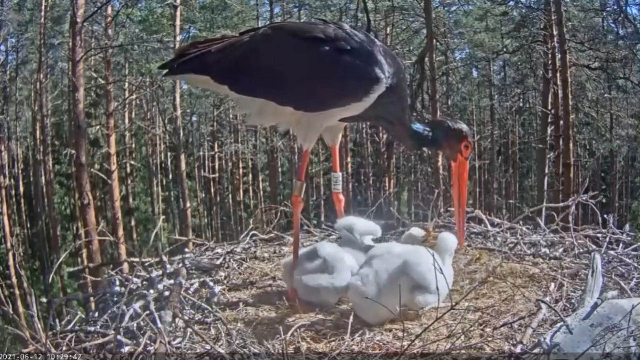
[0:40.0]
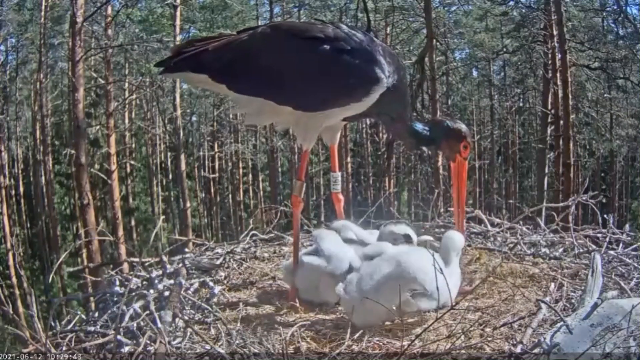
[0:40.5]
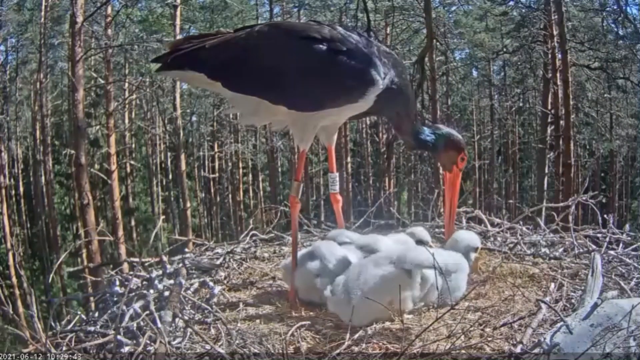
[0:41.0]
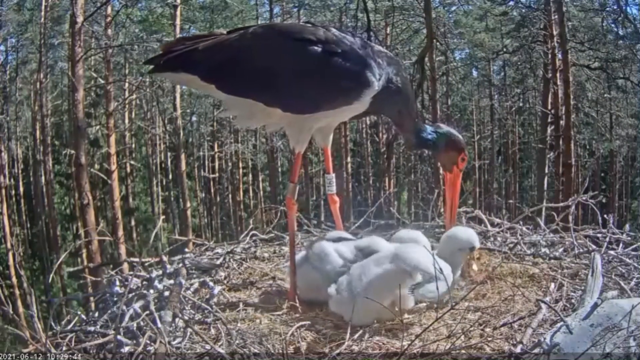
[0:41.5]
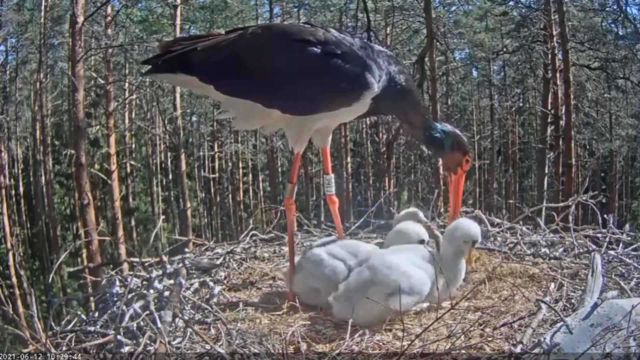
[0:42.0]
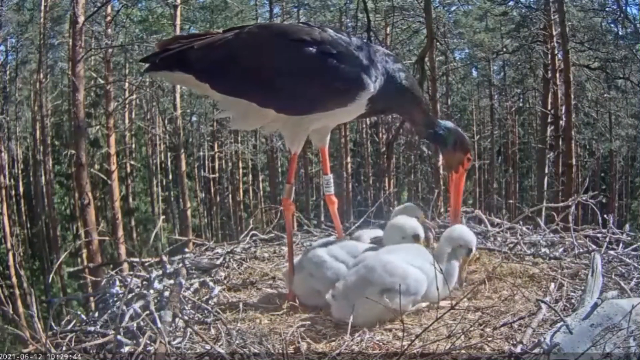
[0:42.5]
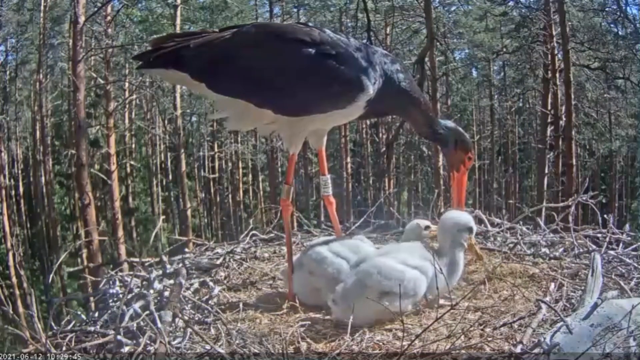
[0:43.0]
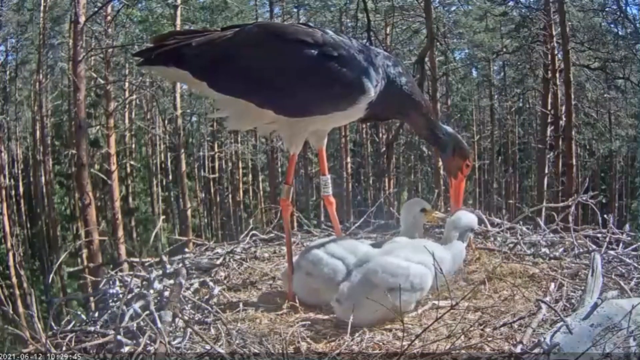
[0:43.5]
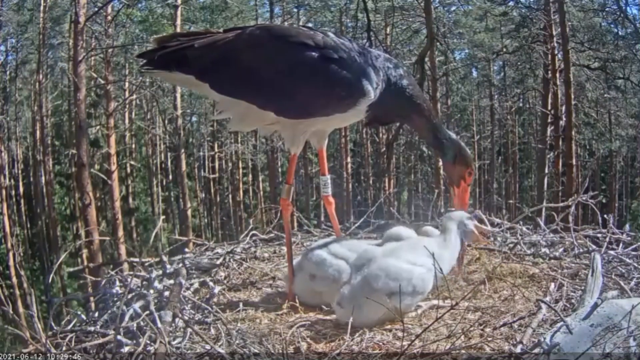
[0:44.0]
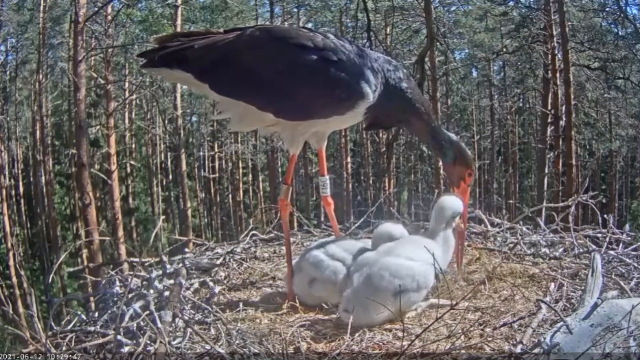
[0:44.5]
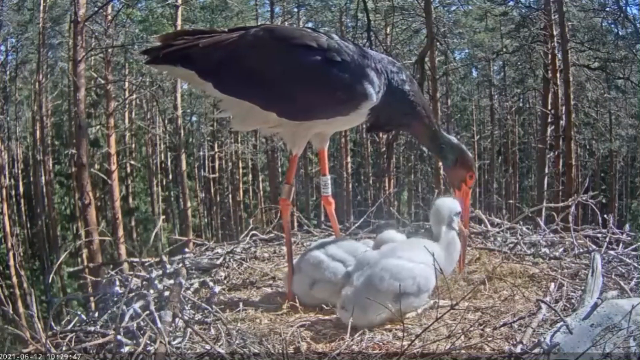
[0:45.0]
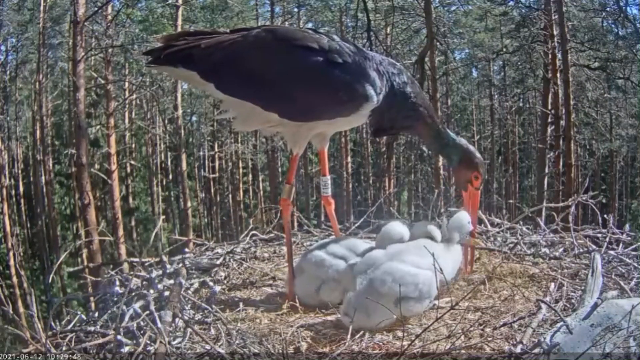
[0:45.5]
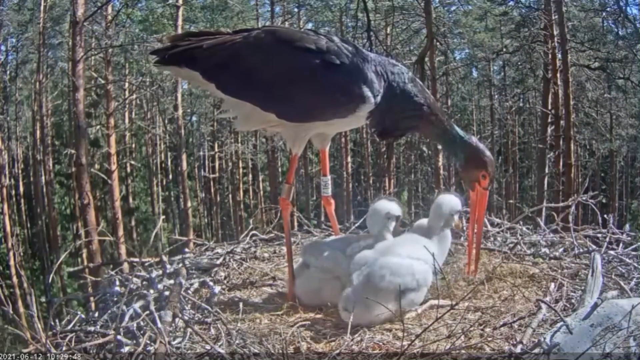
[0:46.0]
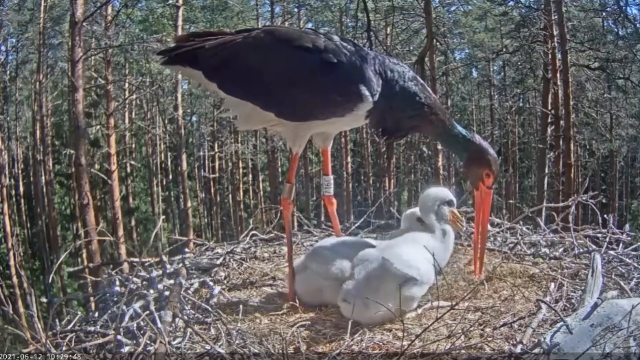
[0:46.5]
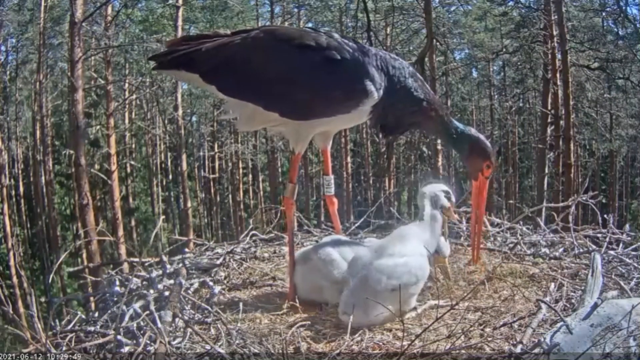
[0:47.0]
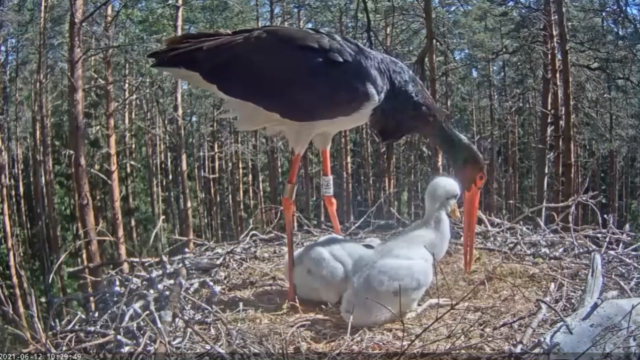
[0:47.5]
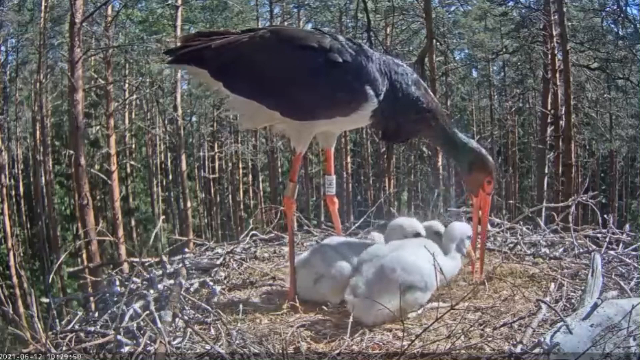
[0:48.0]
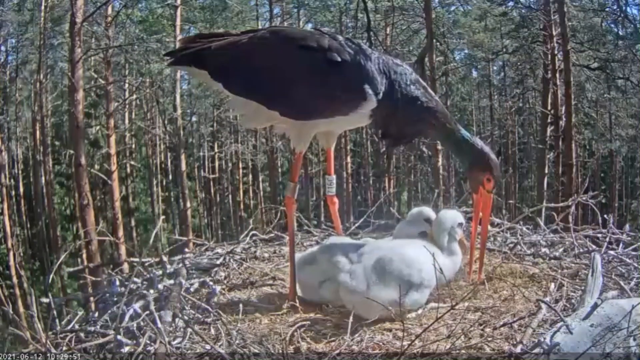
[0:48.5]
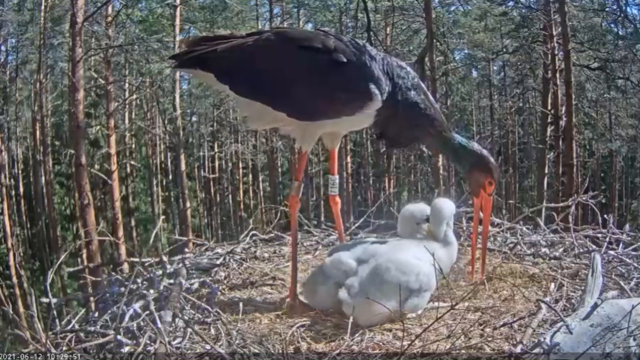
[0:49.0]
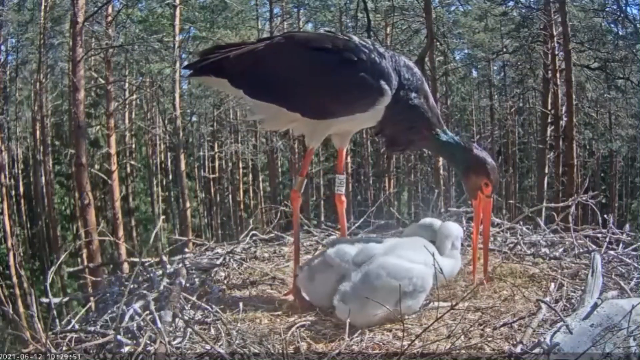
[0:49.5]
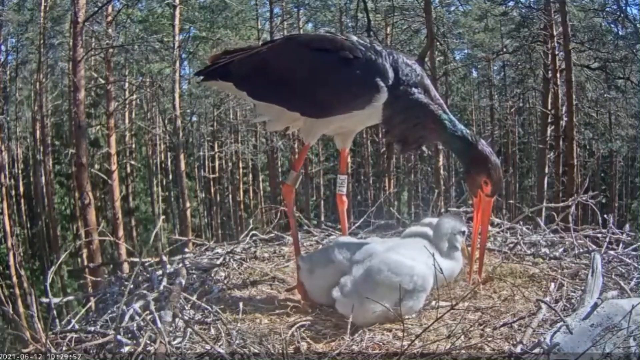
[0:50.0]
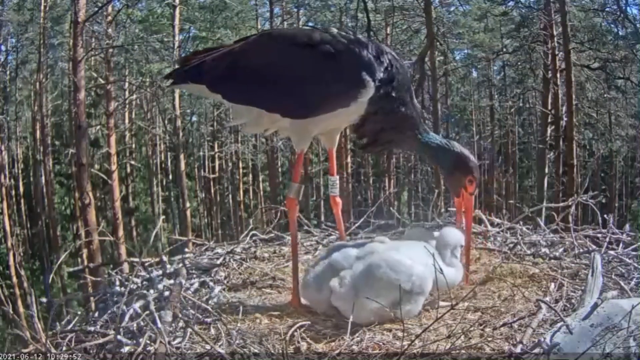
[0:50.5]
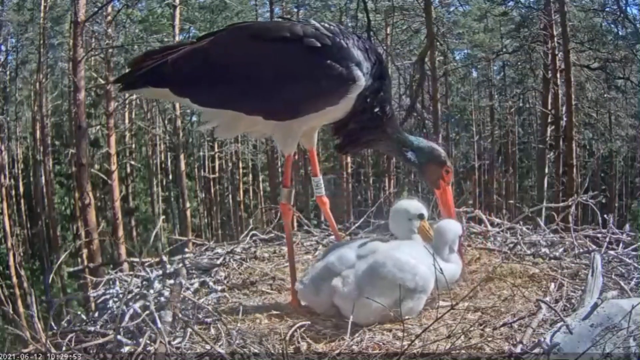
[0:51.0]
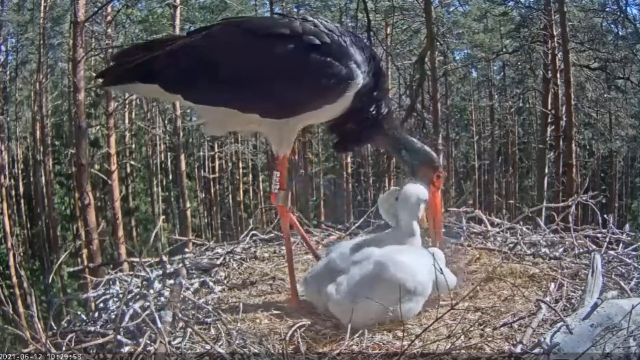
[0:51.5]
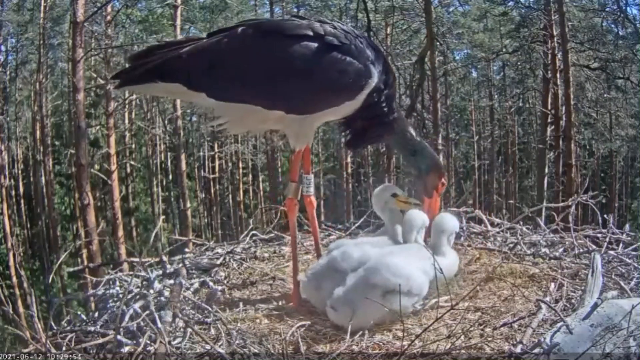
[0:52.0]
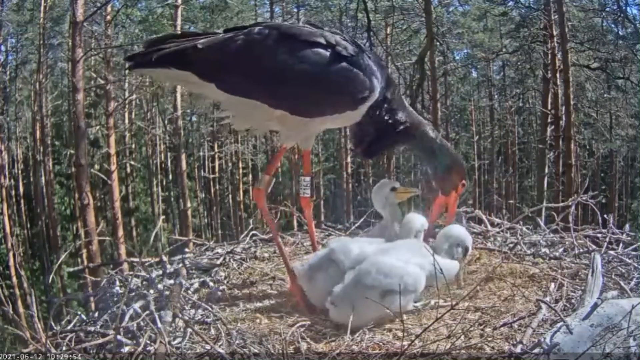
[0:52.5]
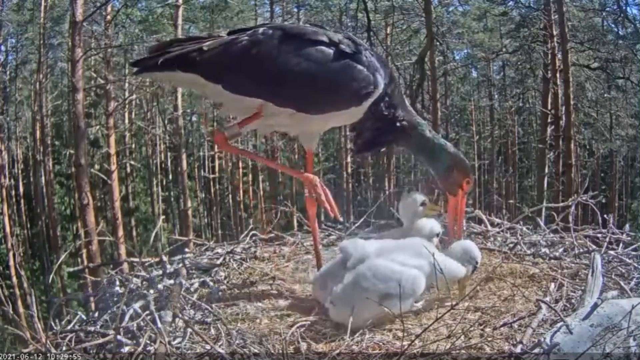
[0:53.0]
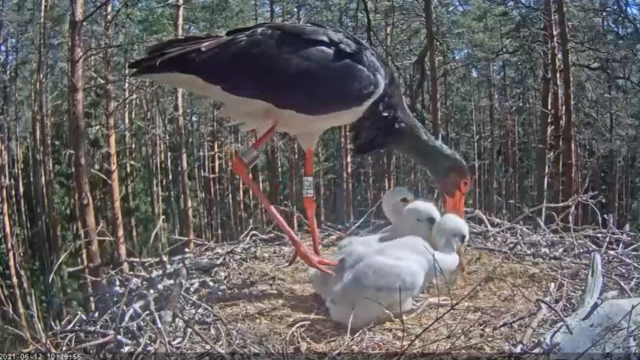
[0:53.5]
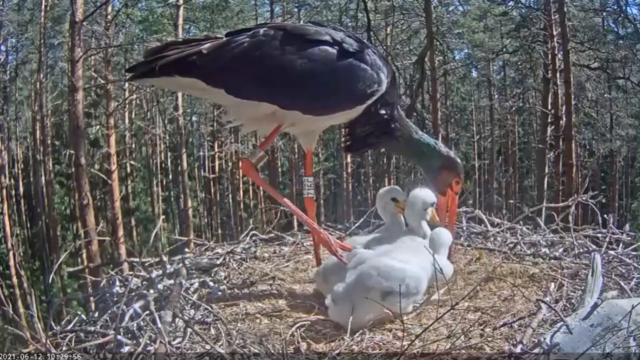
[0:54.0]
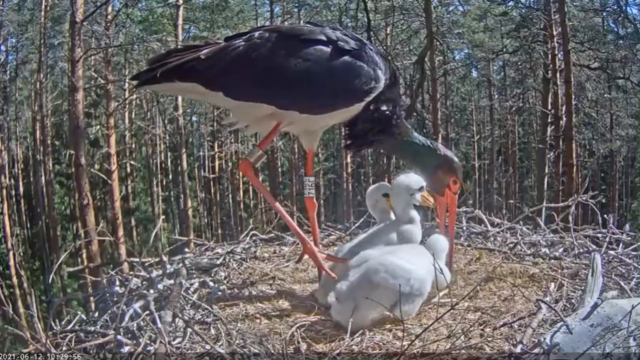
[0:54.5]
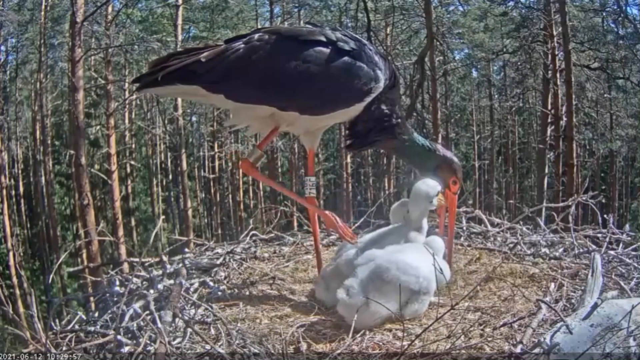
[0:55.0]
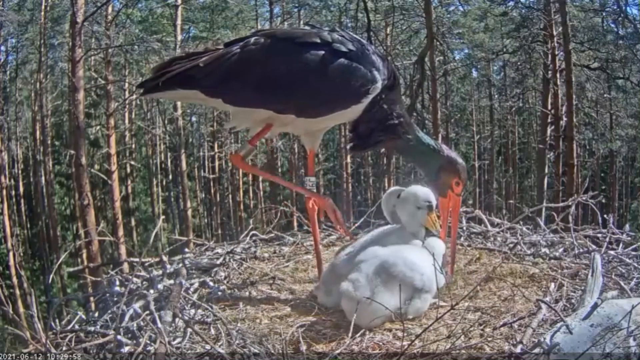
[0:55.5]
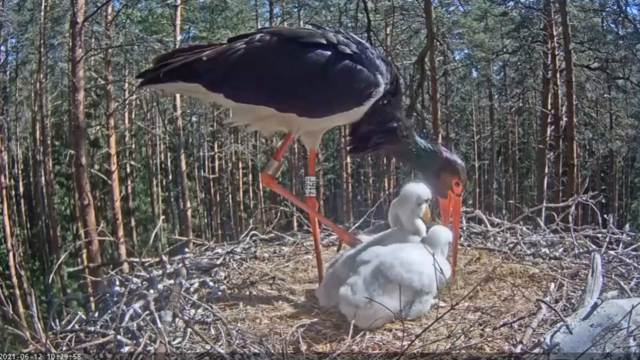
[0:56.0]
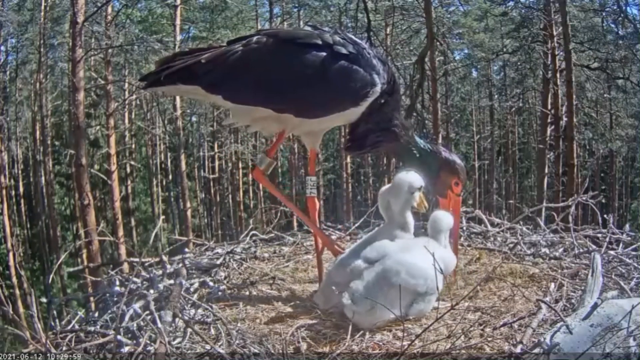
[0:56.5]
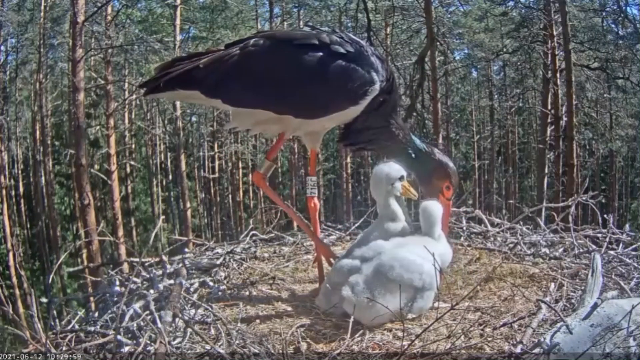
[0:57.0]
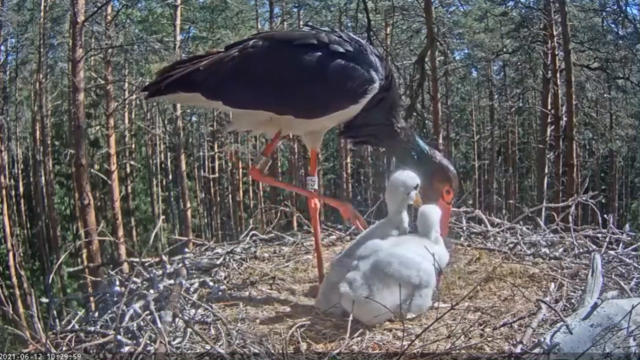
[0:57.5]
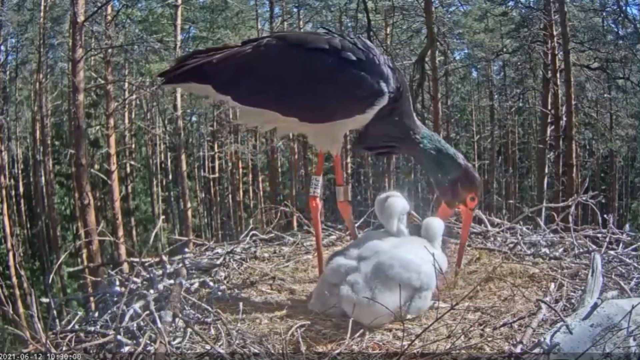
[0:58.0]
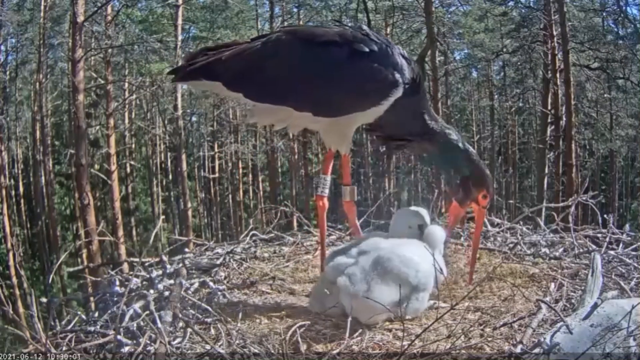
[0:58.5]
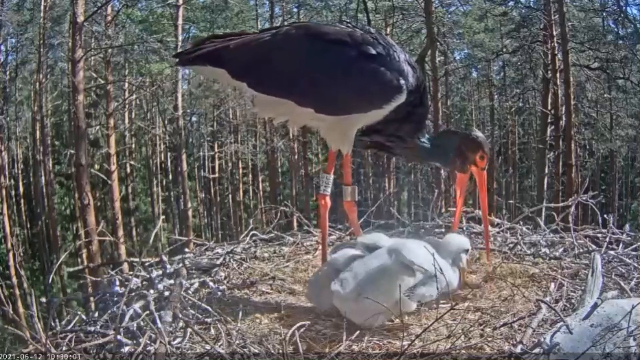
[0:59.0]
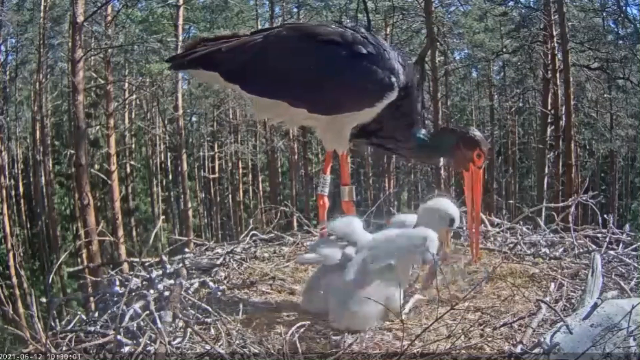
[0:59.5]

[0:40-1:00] Outdoors, a nest of three baby birds is attended to by a mother bird shaped pretty much like a large crane. The mother is black on top and white underneath, with long, skinny reddish-orange legs. While walking around the nest a little, she puts down what may be food for the babies: she seems to puke up some food, and the little babies all try to grab it and eat it. The babies are all white and fluffy compared to the mother, and the nest is built of twigs with a soft, fluffier area right in the middle. The babies' beaks are yellow, while the mother's long, skinny beak is an orangish-red color.